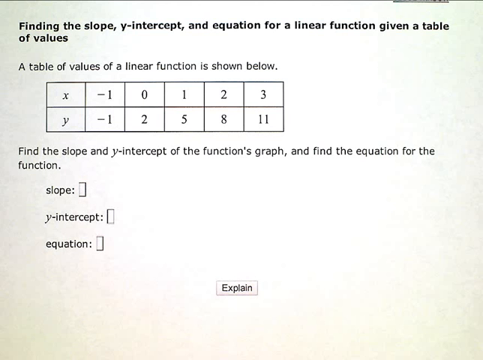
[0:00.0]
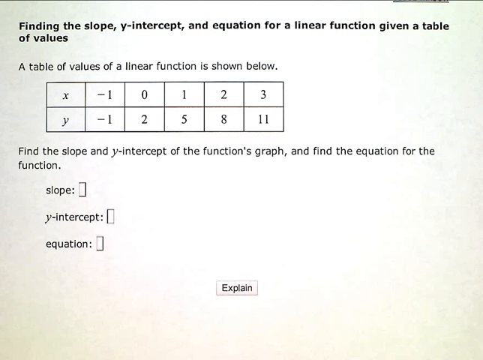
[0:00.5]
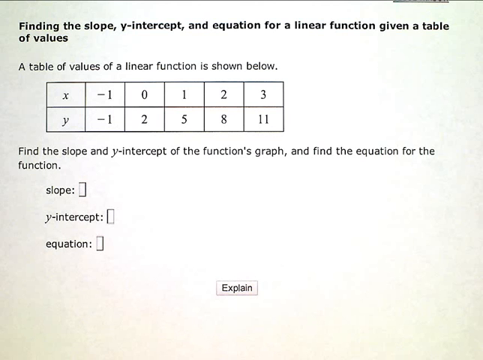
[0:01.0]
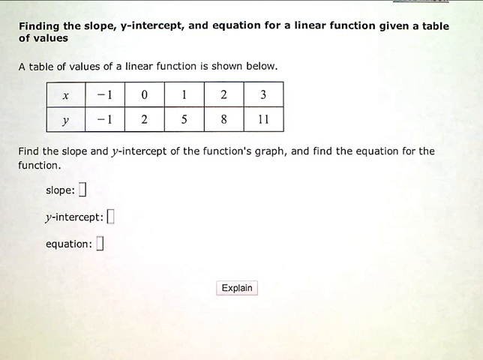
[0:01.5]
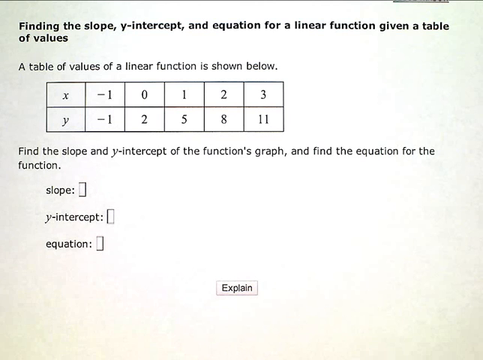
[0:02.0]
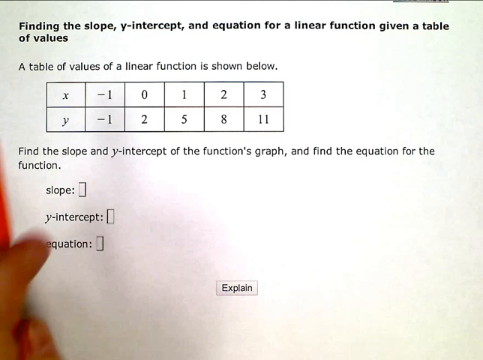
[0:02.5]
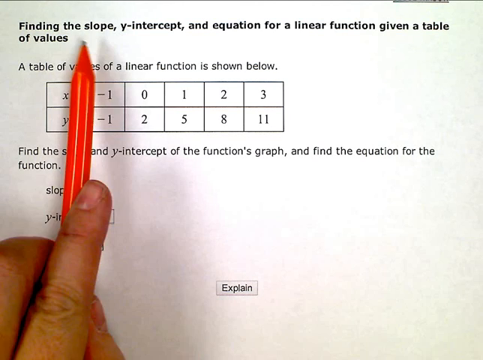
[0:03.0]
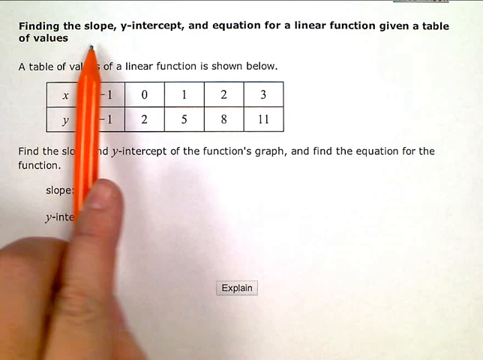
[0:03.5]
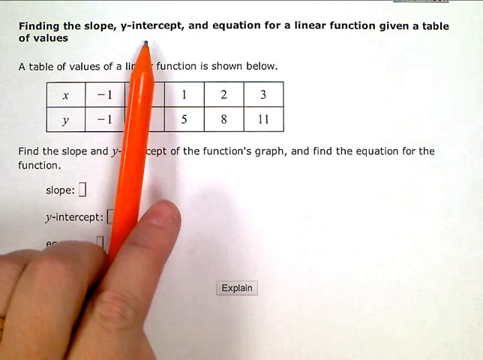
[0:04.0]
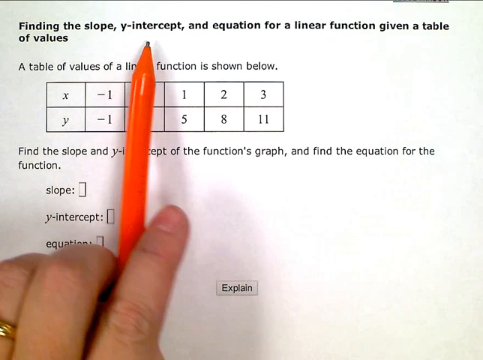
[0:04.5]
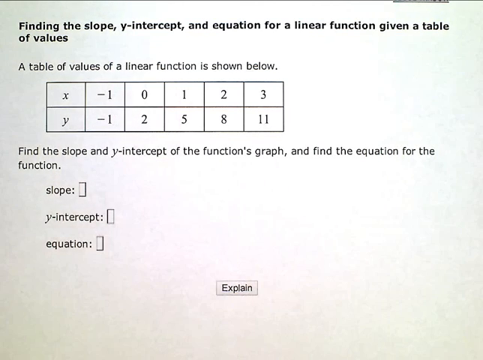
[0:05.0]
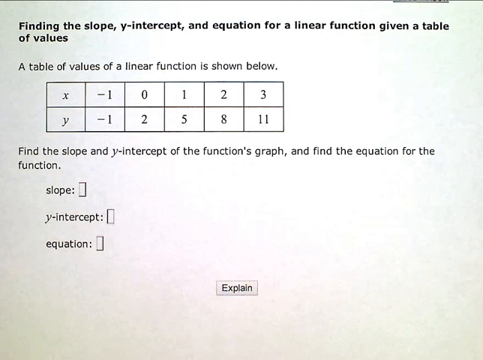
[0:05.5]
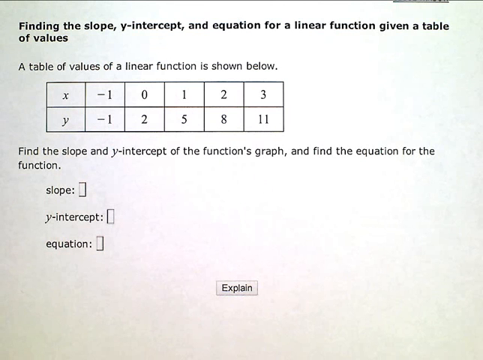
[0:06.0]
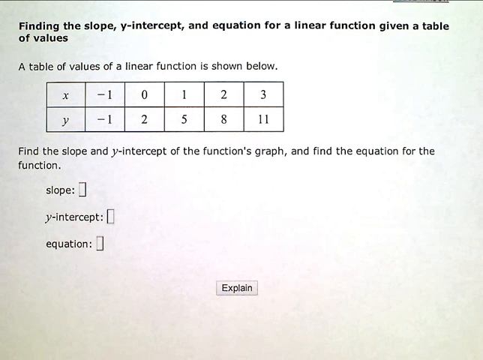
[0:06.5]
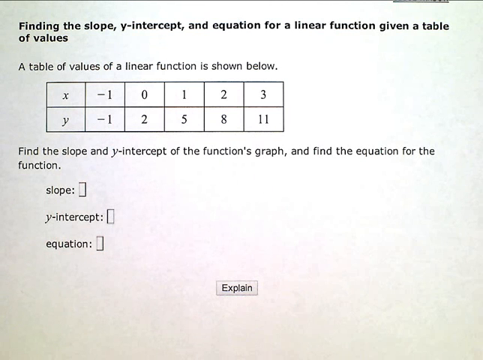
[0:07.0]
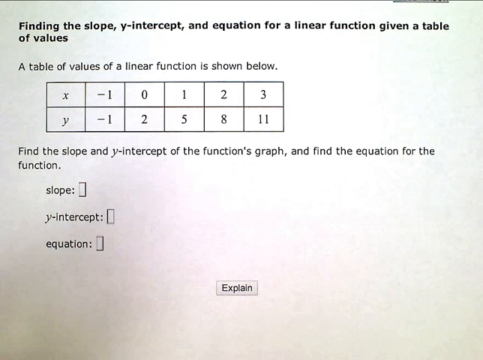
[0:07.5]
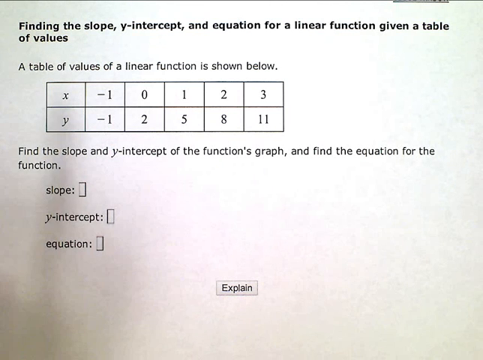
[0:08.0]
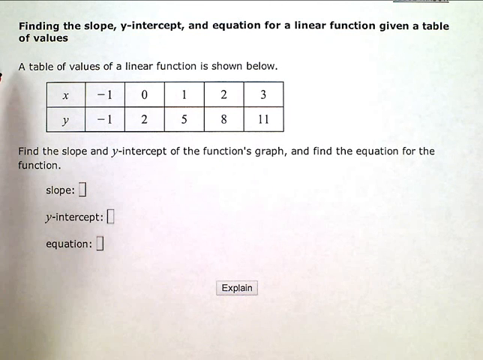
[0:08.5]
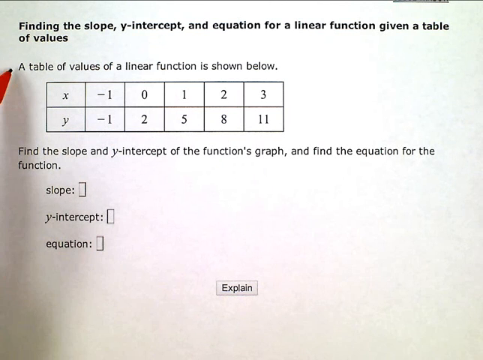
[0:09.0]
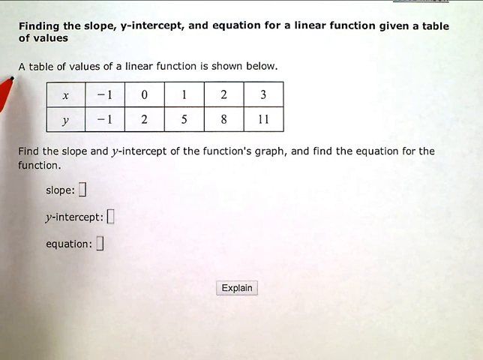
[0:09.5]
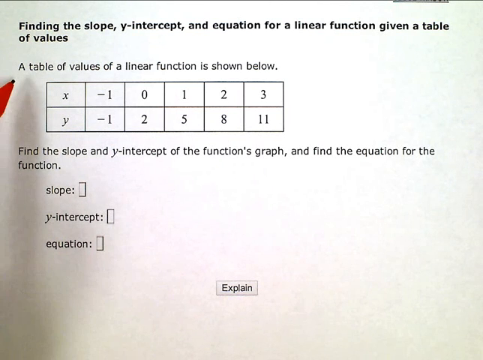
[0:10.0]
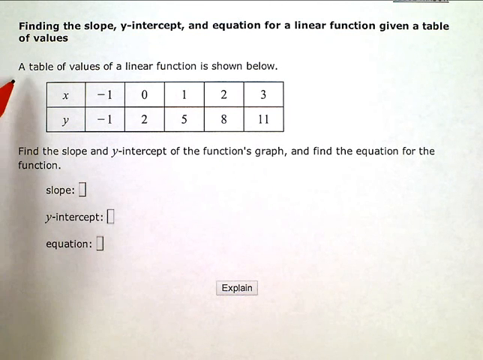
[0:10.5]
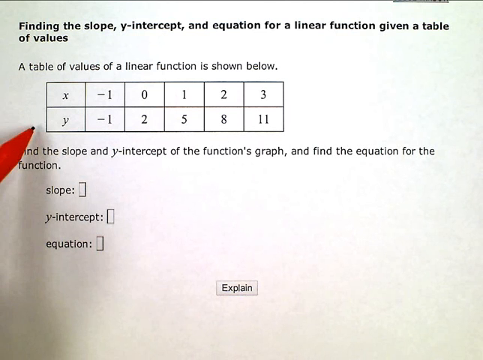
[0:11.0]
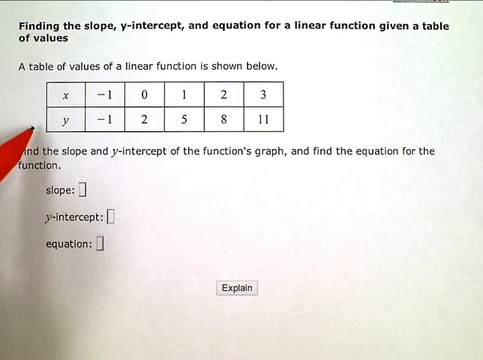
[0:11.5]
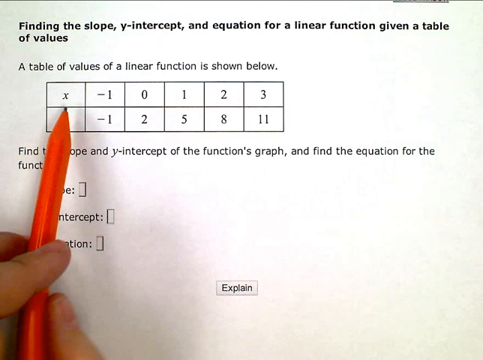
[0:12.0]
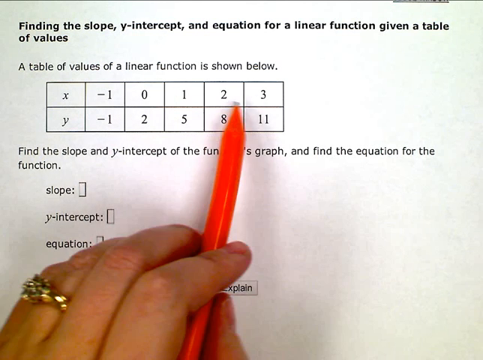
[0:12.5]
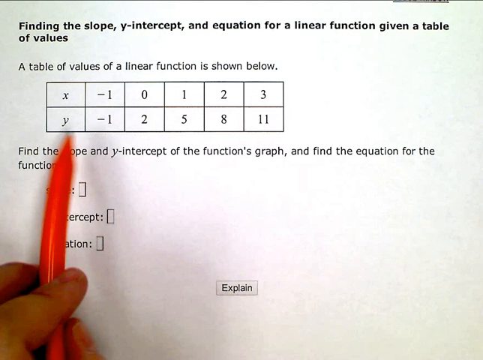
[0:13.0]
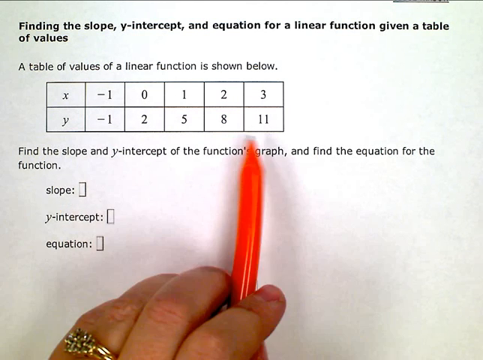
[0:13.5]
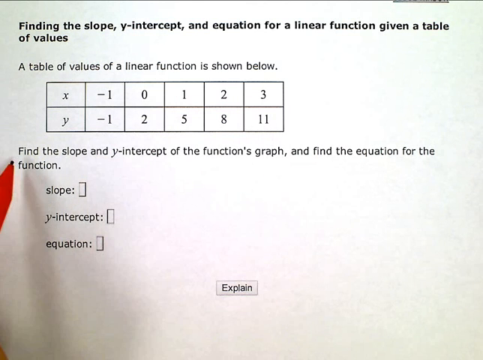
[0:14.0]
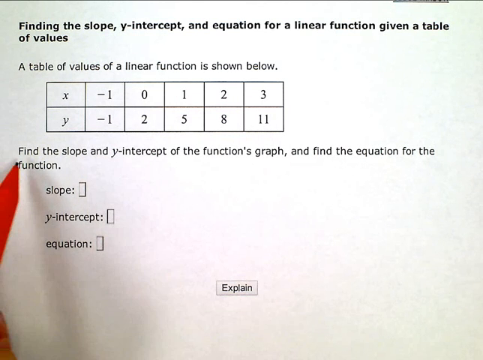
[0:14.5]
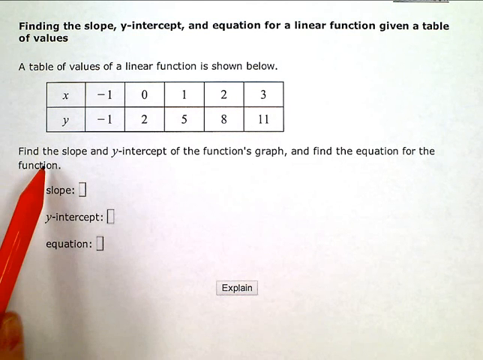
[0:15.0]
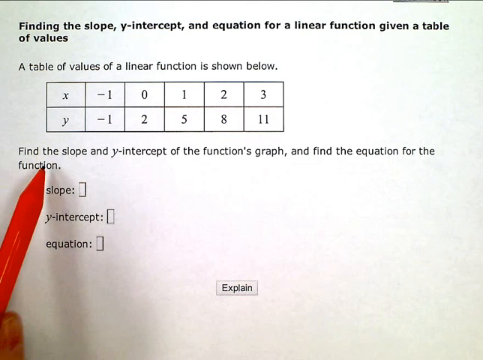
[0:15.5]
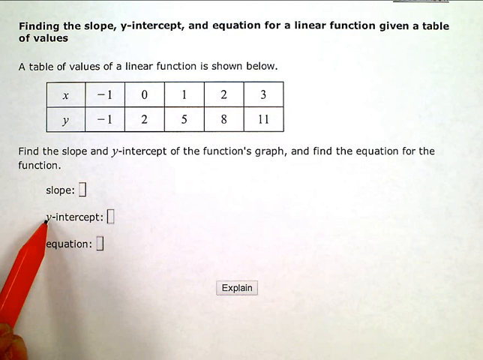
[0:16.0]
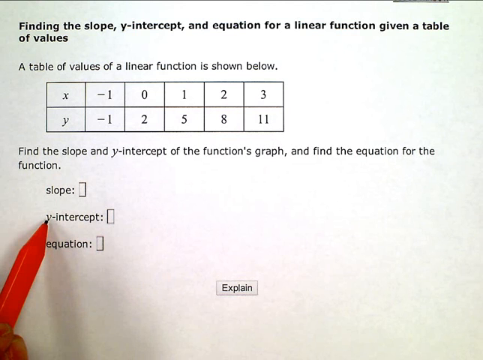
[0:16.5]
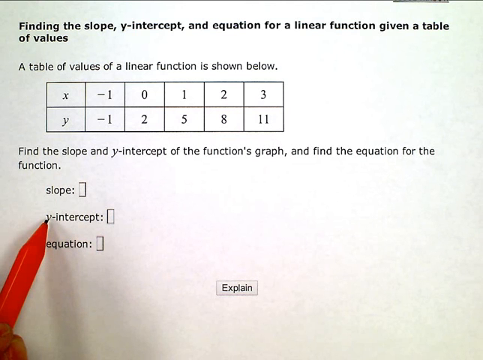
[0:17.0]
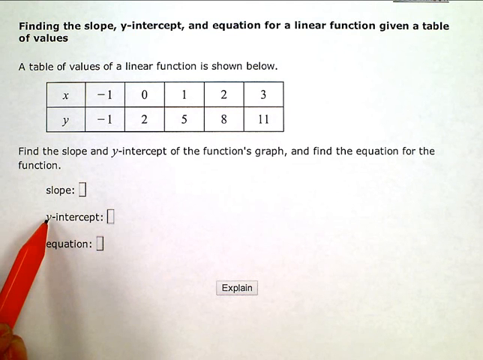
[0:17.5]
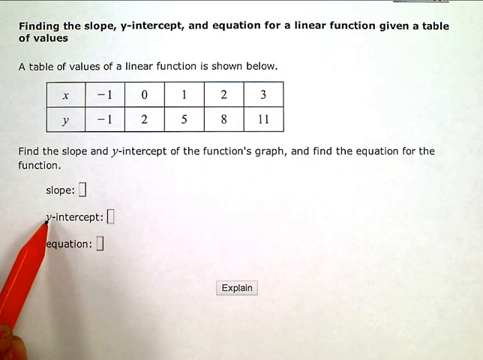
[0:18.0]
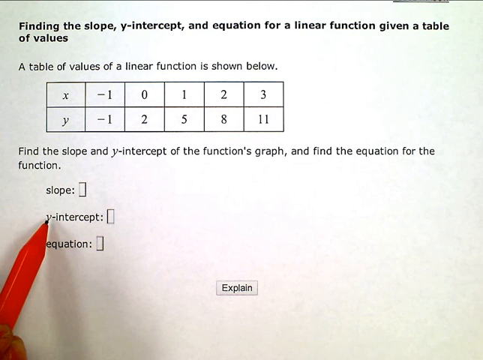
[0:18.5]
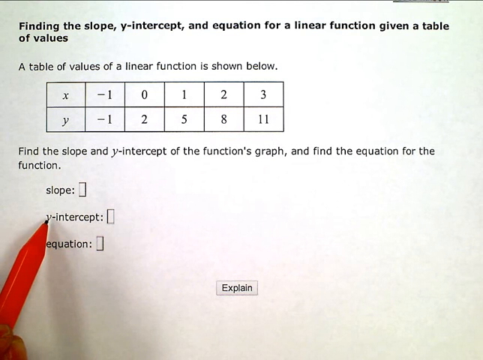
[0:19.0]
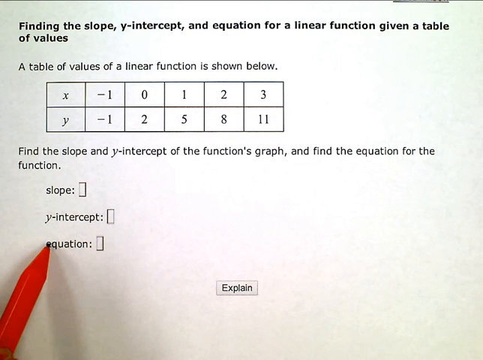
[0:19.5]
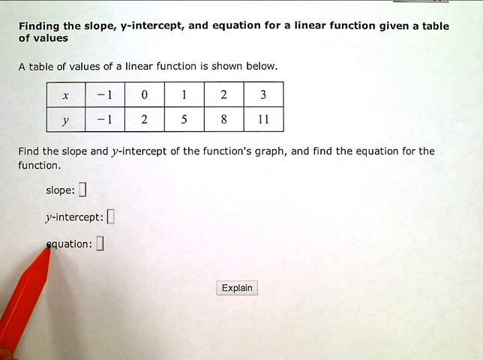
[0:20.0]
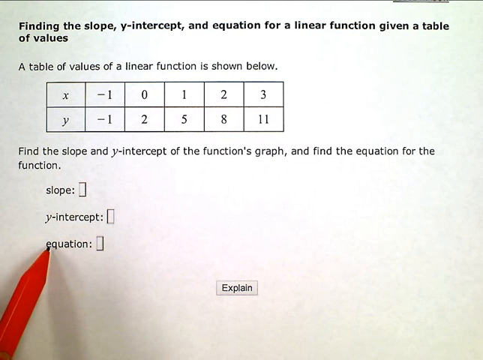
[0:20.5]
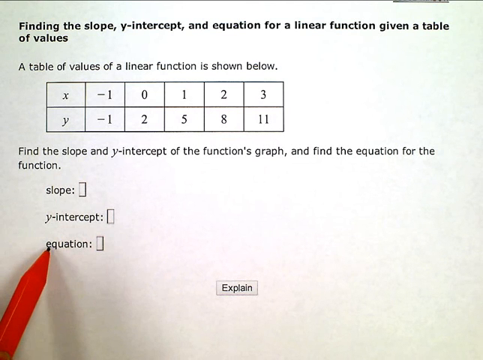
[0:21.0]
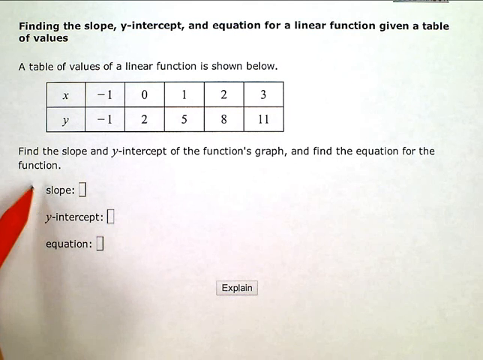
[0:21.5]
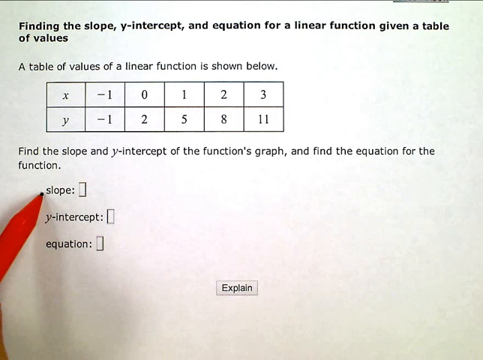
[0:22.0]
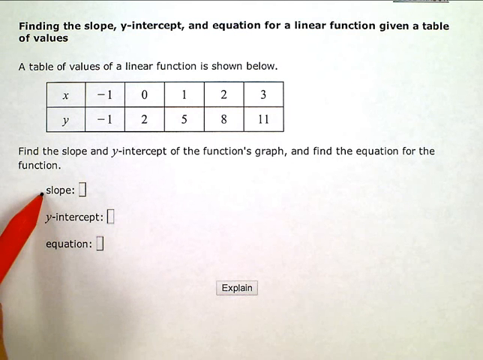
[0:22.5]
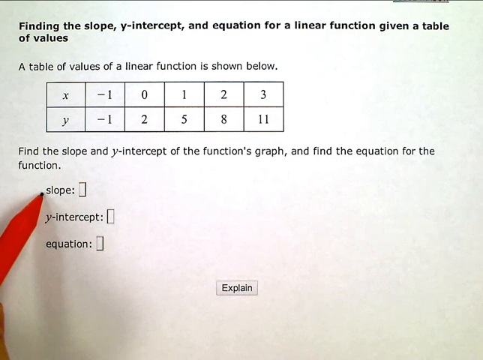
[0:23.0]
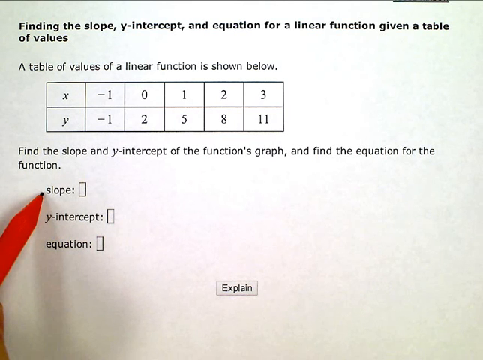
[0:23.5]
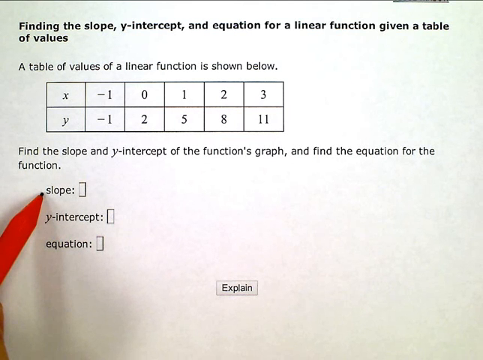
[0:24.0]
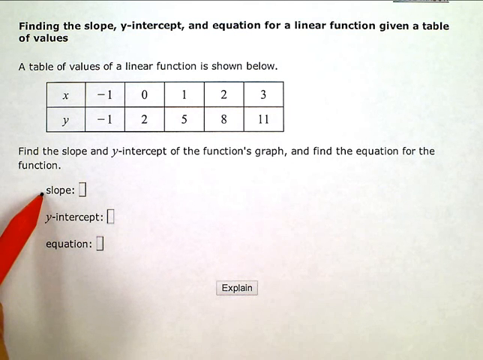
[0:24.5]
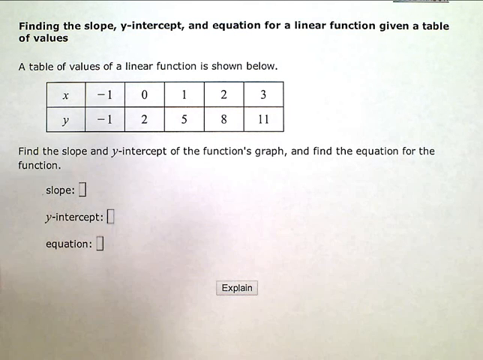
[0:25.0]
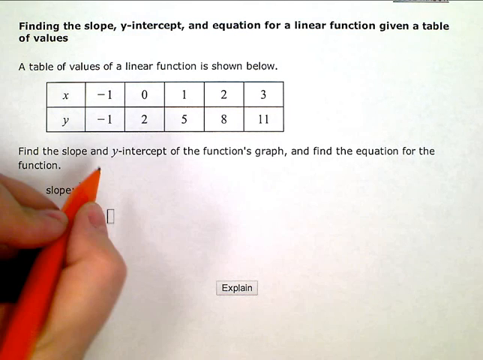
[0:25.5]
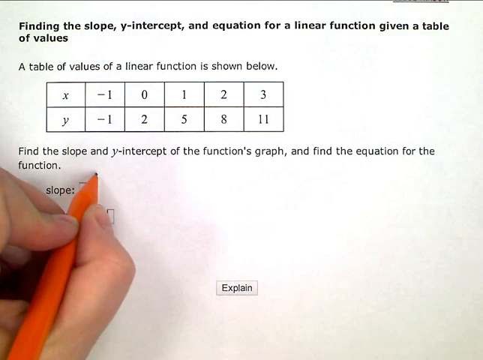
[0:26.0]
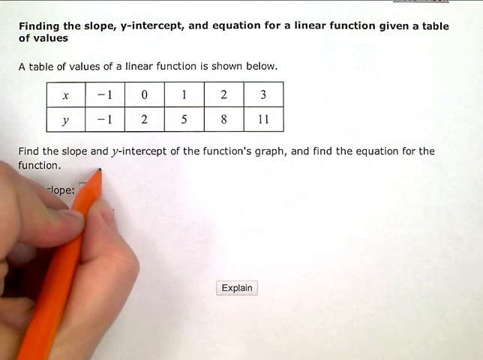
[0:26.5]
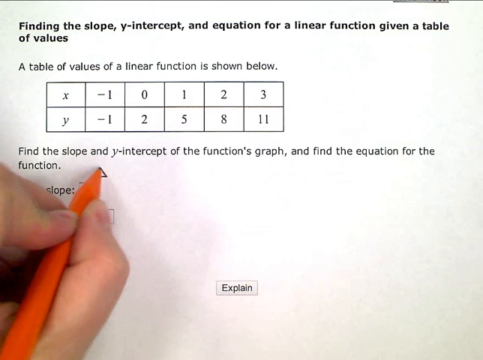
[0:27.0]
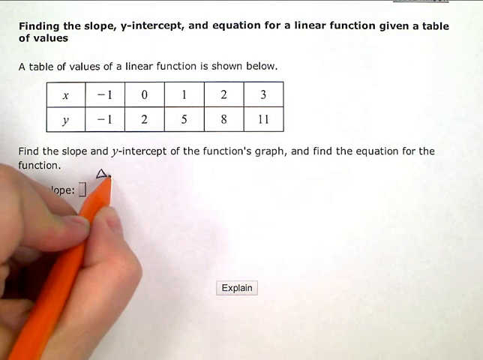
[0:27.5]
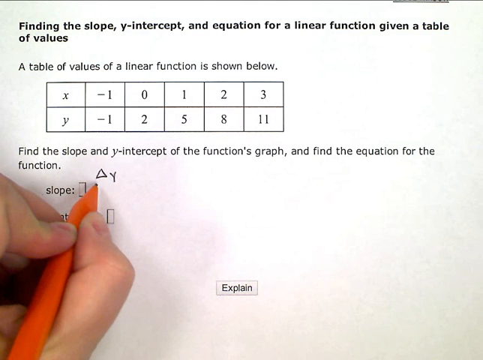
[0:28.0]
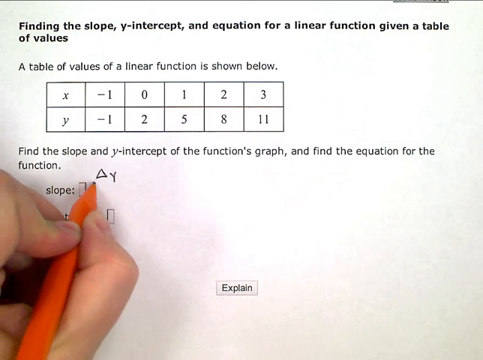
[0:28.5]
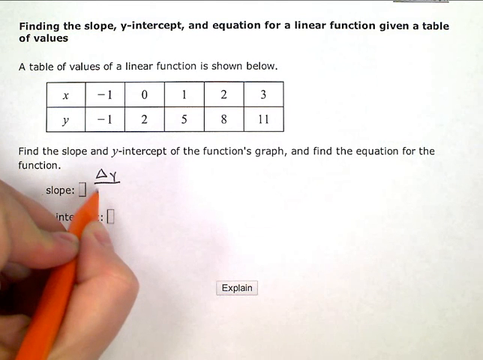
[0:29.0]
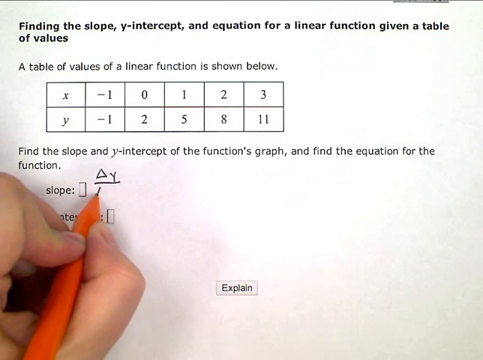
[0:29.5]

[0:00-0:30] A mathematics question appears on screen. The text reads "finding the slope, y-intercept, and equation for a linear function given a table of values", followed by "a table of values of a linear function is shown below". The table has x and y columns: for x equals -1, y equals -1; for x equals 0, y equals 2; for x equals 1, y equals 5; for x equals 2, y equals 8; for x equals 3, y equals 11. Below the table is the instruction "find the slope and y-intercept of function graphs" along with fields labeled slope, y-intercept and equation, and an explain button. An orange pen appears; it goes over the table, points out the equation, y-intercept and slope fields, and writes delta y and delta x in the slope field.